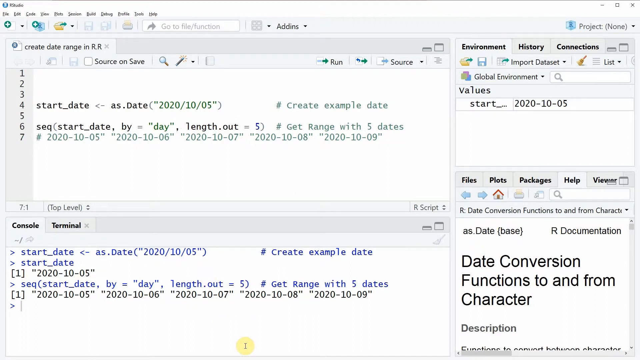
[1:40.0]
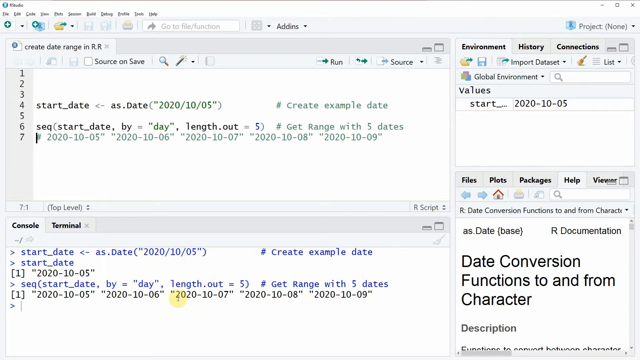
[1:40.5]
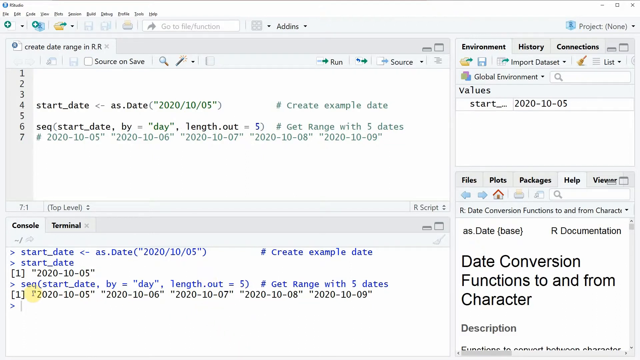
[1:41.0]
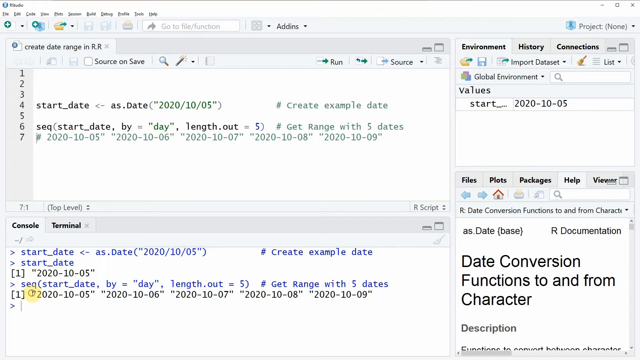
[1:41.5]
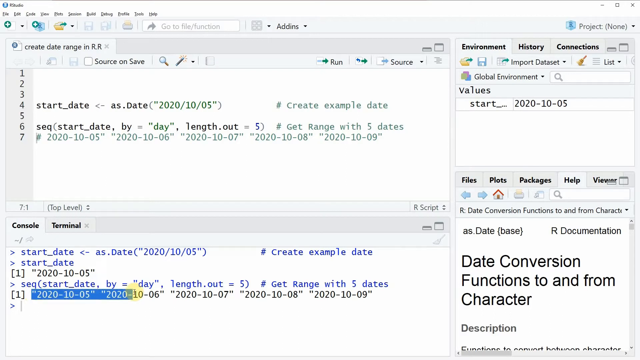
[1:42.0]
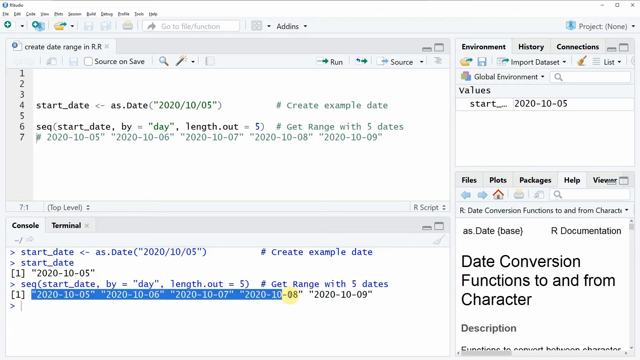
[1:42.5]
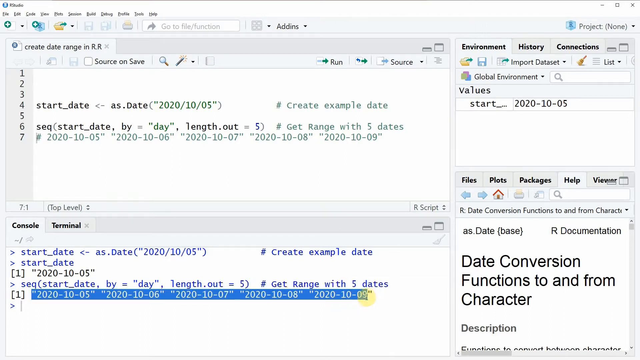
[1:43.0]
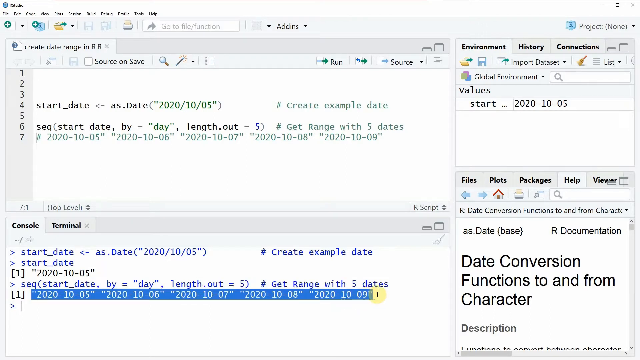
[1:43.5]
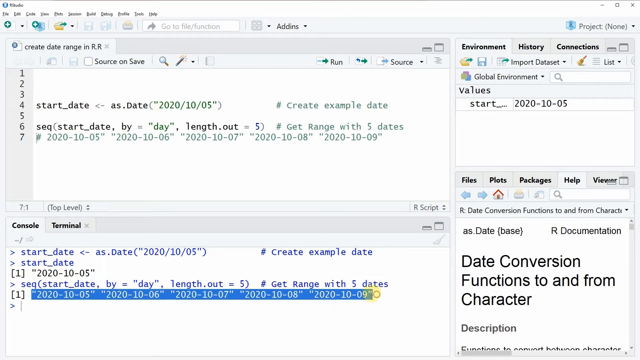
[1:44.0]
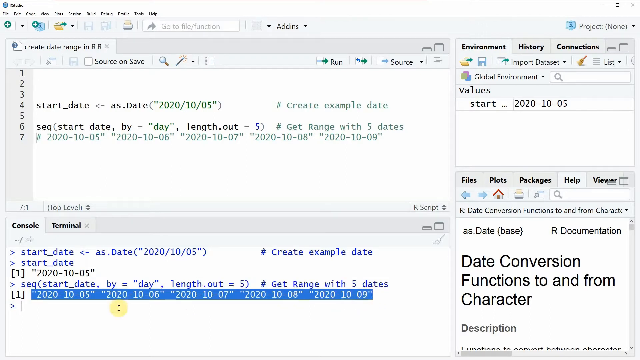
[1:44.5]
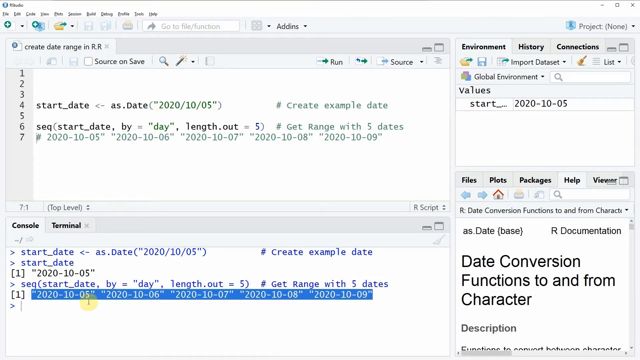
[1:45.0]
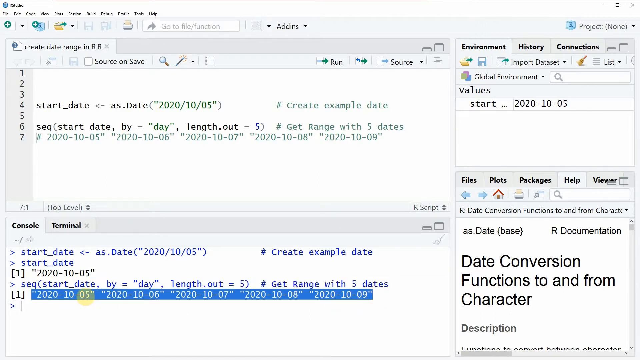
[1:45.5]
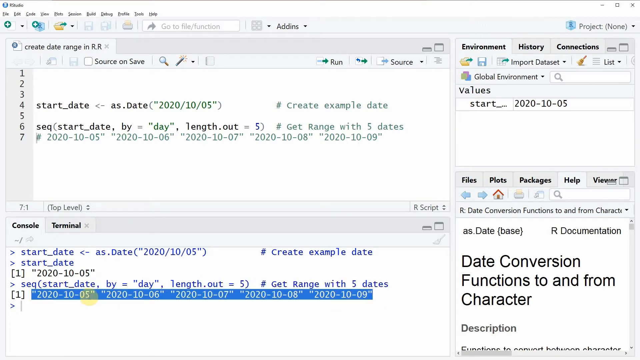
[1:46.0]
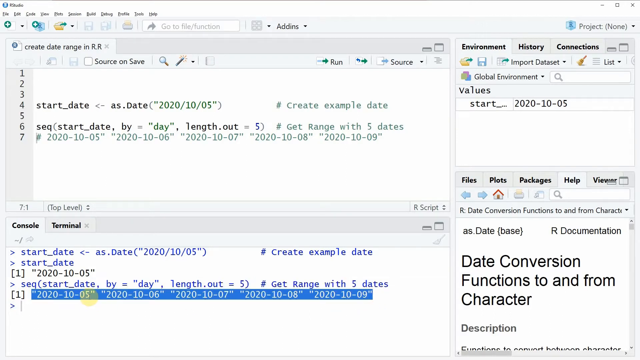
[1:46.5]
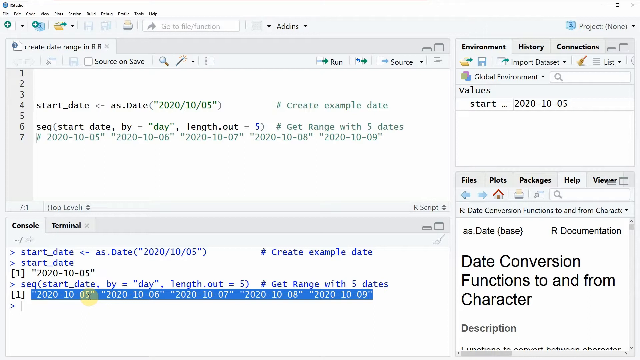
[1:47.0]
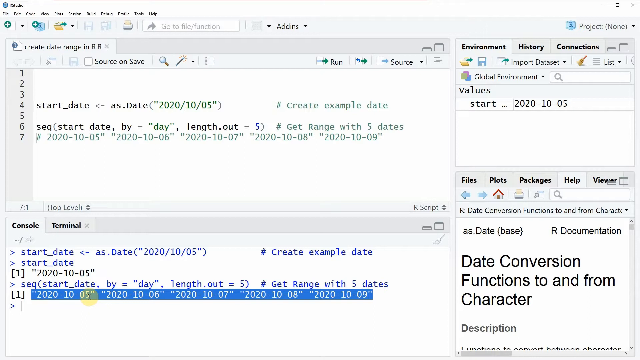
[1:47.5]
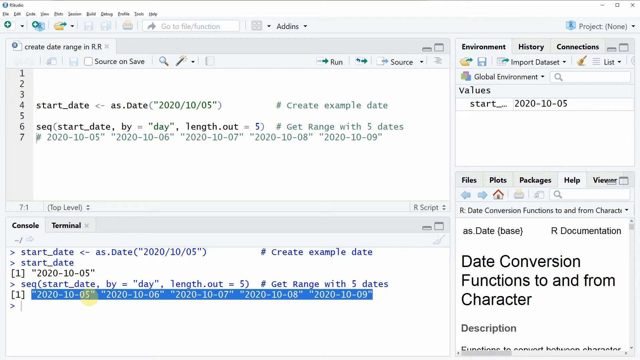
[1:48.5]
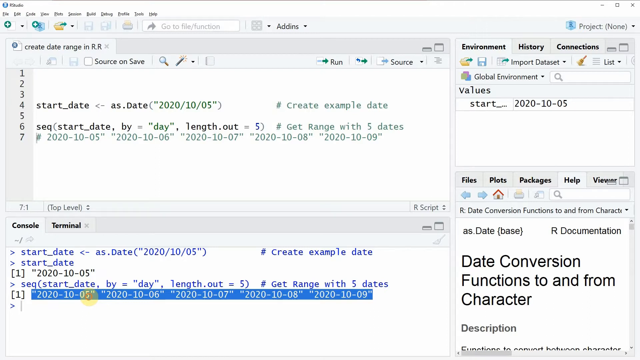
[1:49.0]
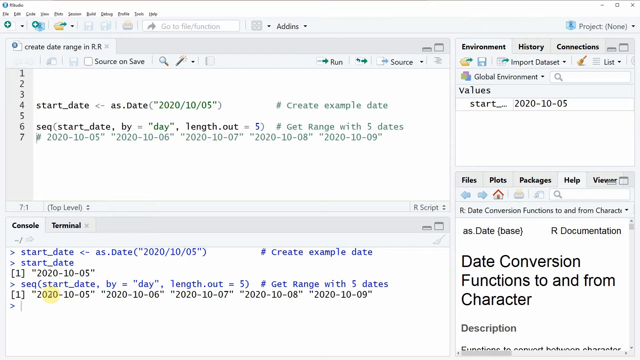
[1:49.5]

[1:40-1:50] Code is on the left-hand side of the screen, with some parts highlighted and others not. The right-hand side contains text about date conversion and functions.